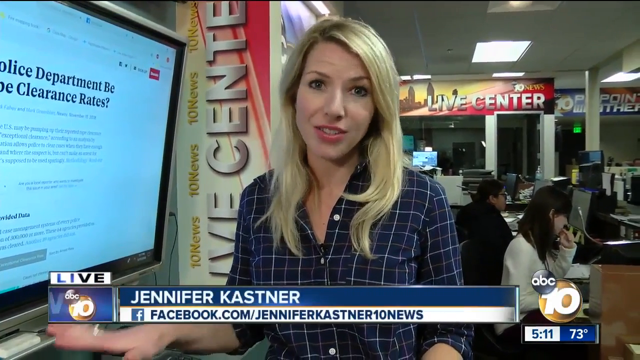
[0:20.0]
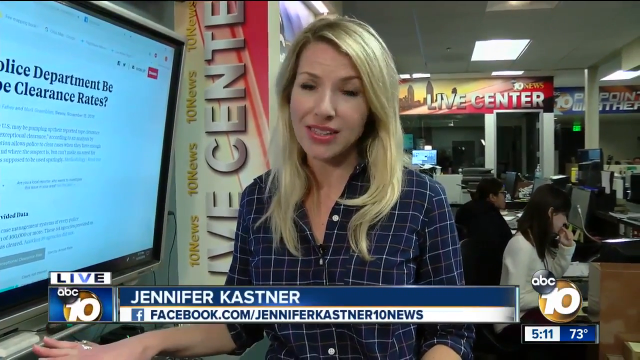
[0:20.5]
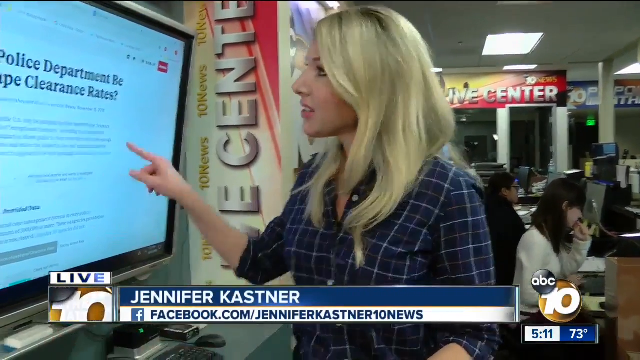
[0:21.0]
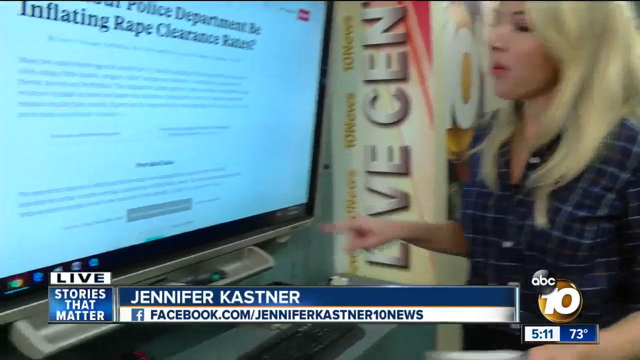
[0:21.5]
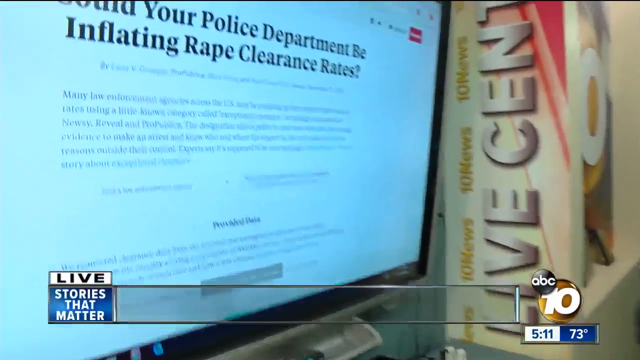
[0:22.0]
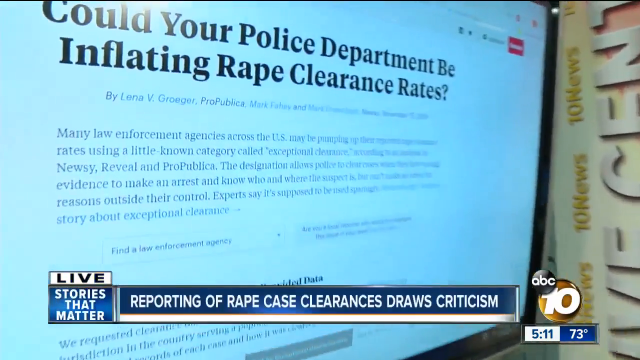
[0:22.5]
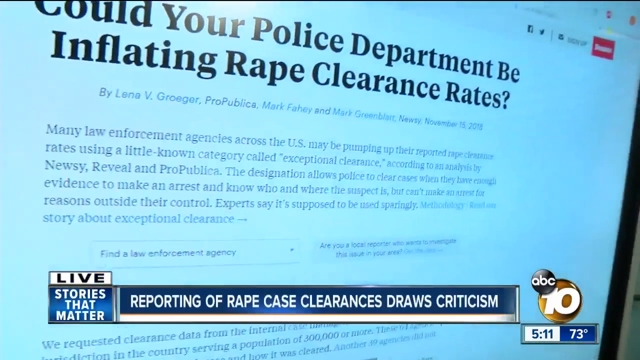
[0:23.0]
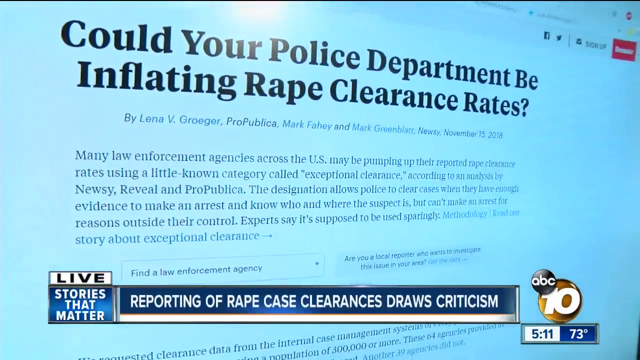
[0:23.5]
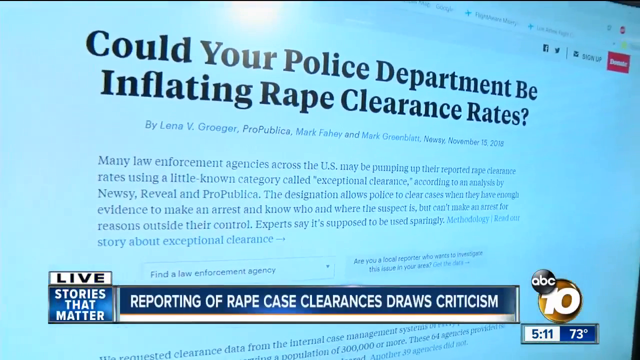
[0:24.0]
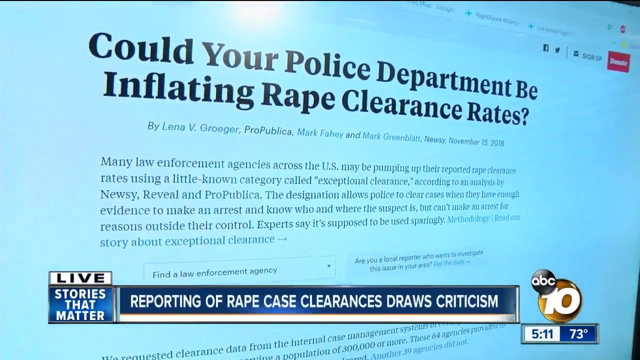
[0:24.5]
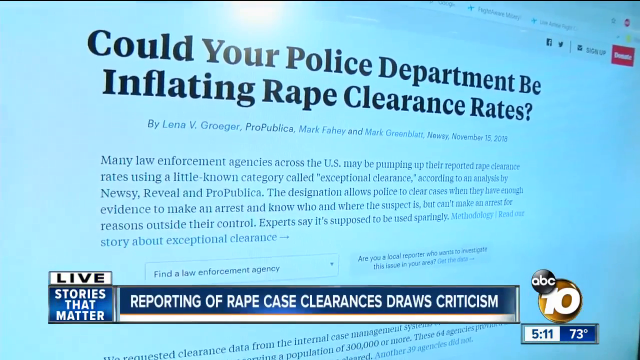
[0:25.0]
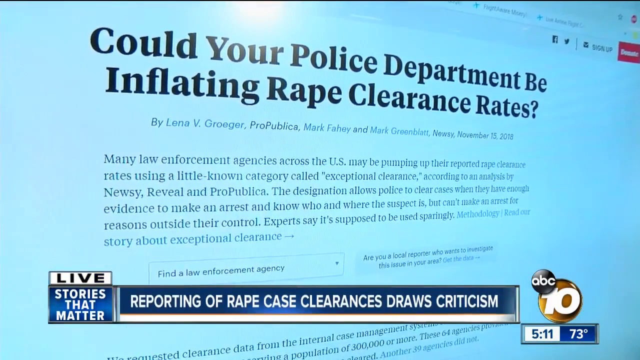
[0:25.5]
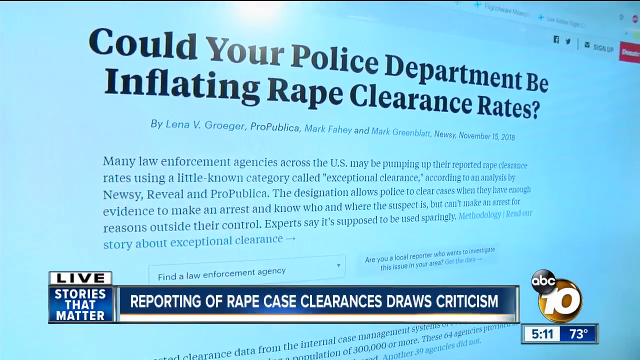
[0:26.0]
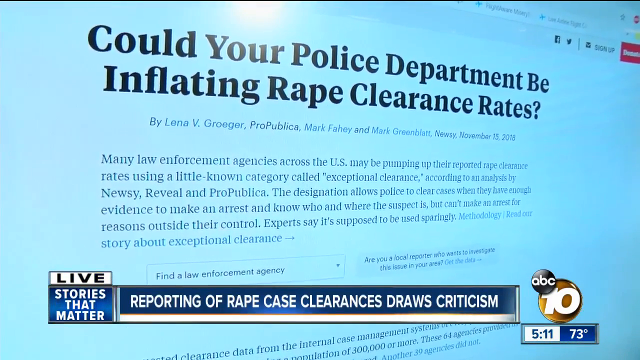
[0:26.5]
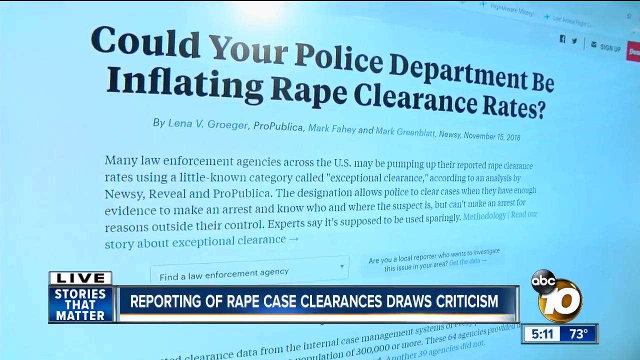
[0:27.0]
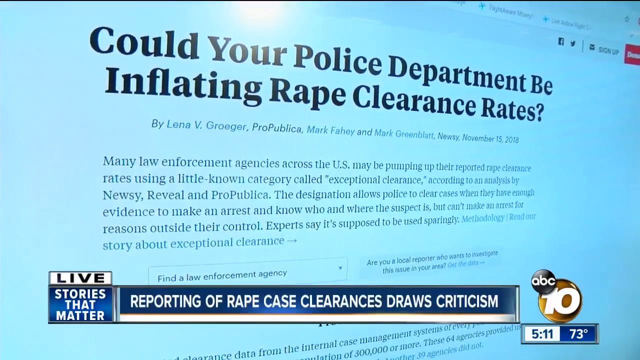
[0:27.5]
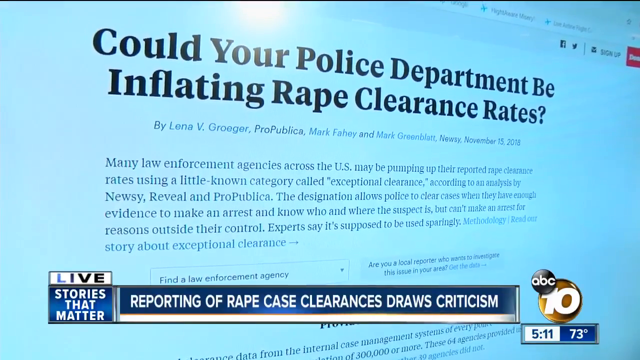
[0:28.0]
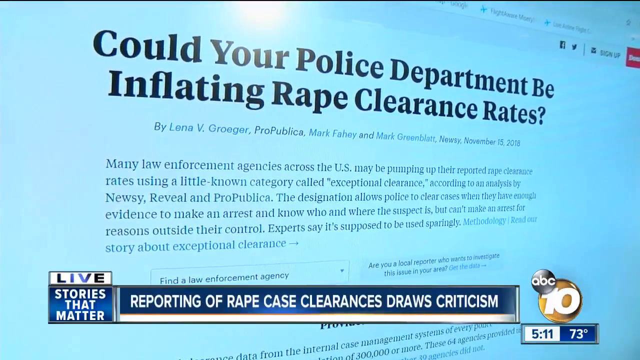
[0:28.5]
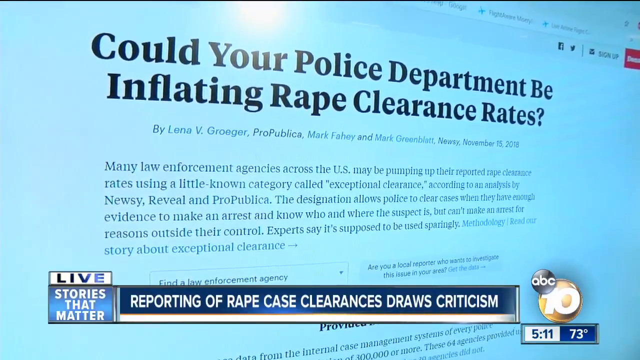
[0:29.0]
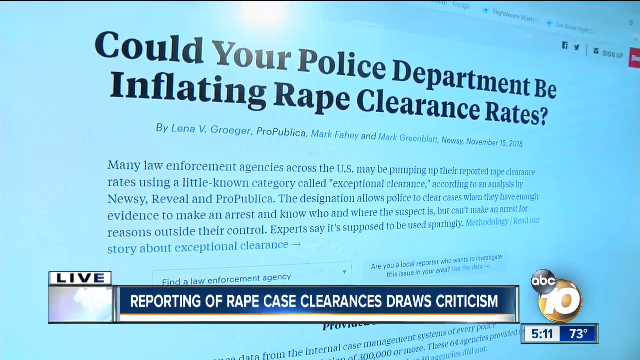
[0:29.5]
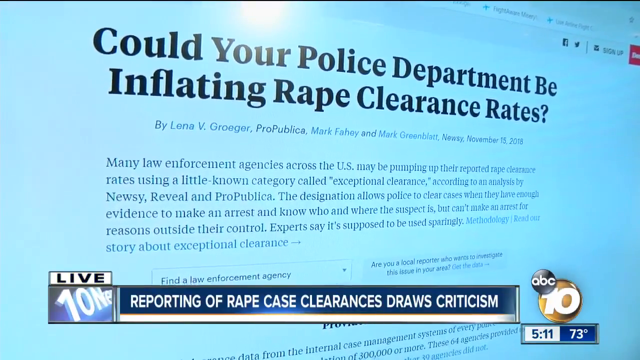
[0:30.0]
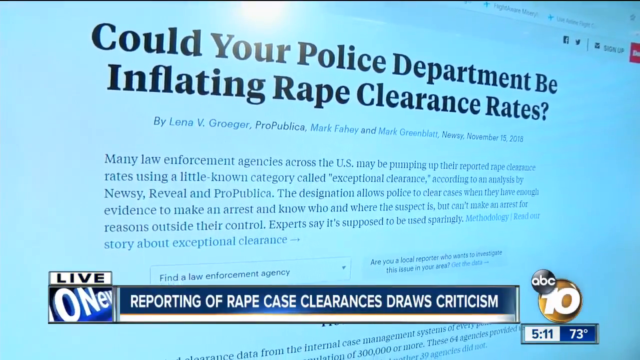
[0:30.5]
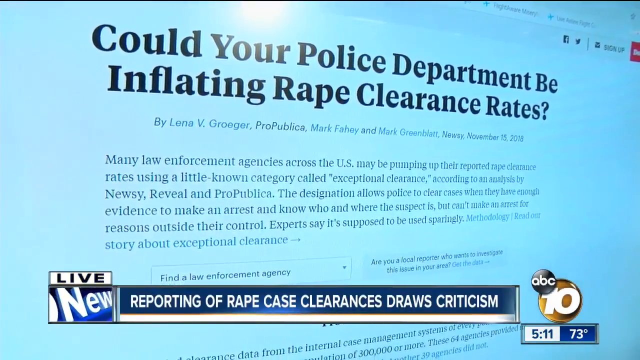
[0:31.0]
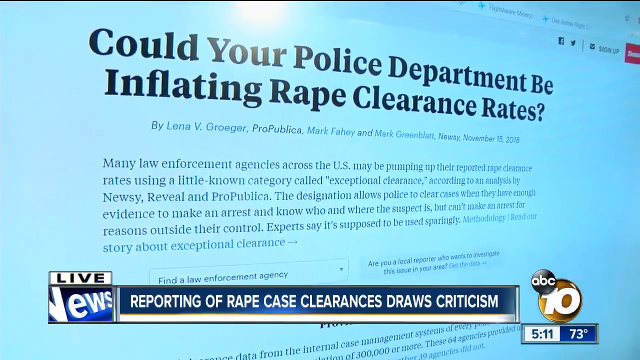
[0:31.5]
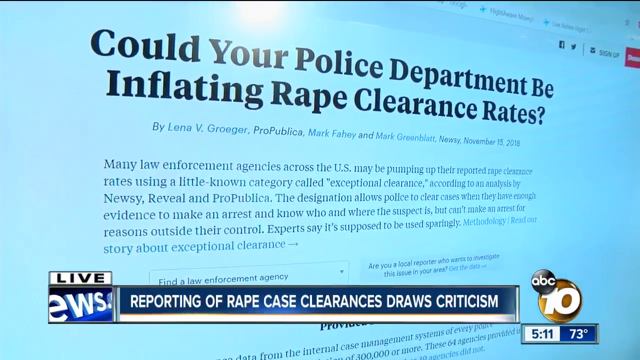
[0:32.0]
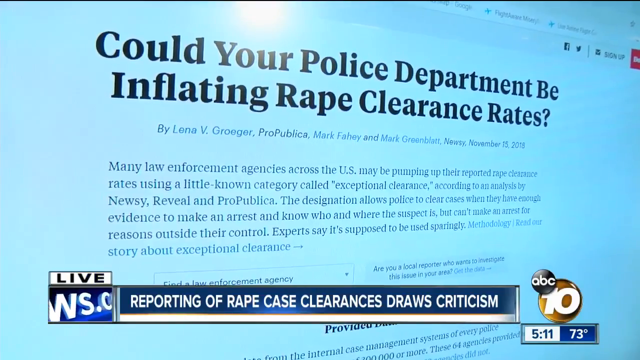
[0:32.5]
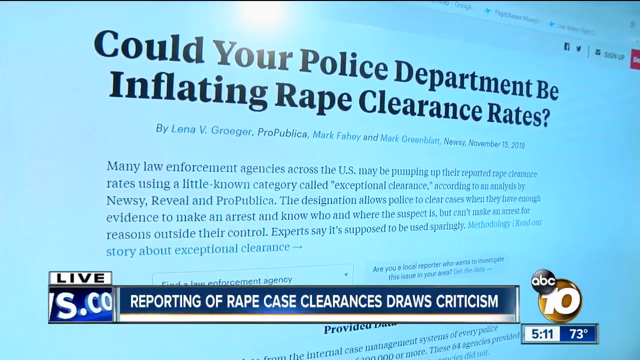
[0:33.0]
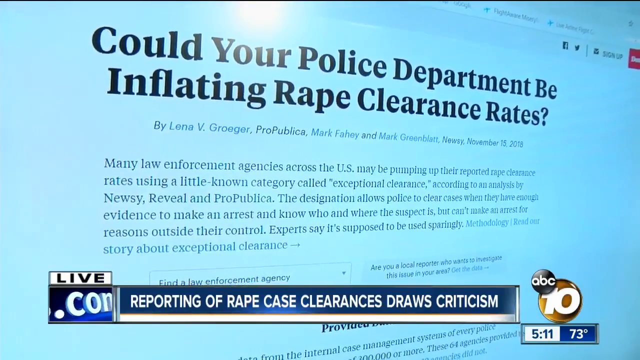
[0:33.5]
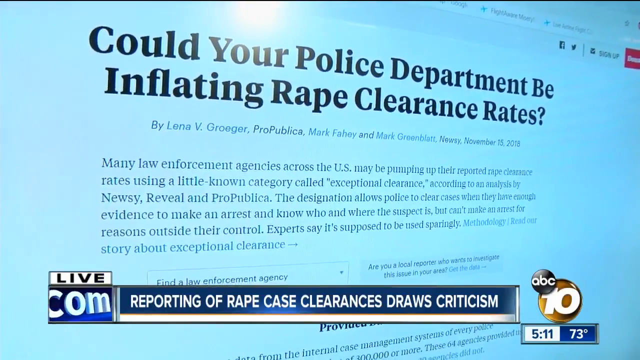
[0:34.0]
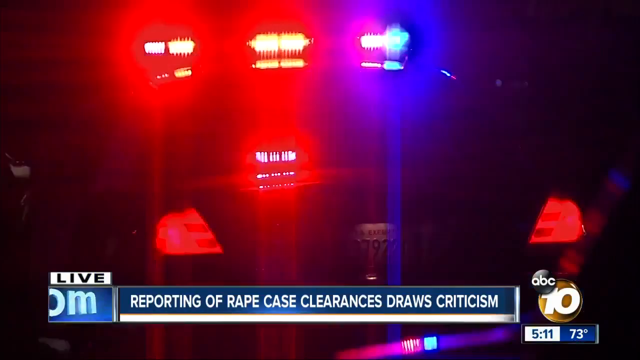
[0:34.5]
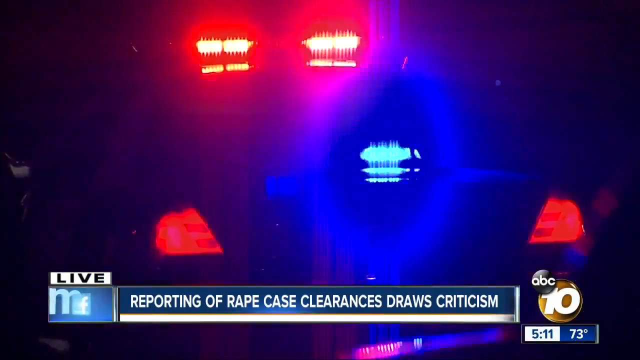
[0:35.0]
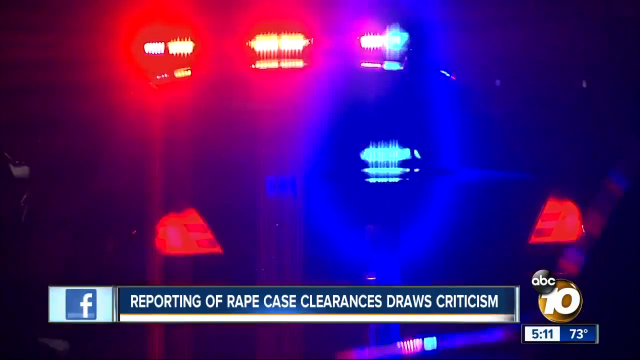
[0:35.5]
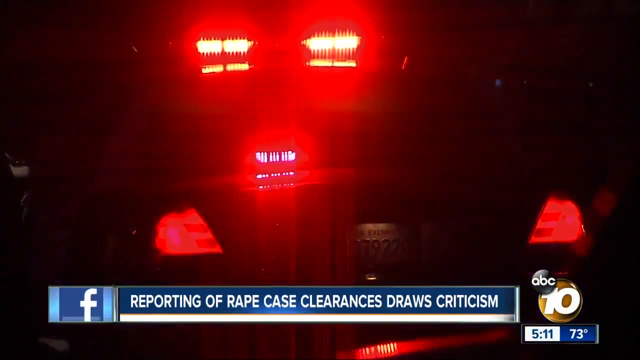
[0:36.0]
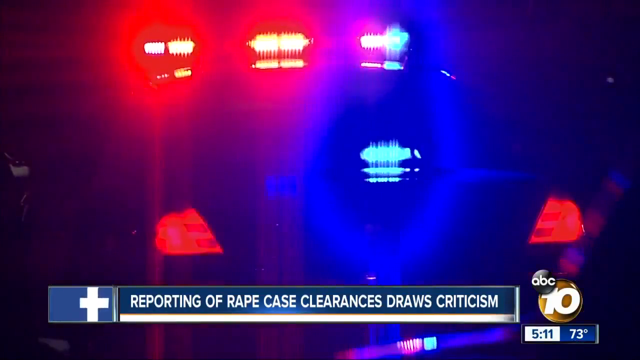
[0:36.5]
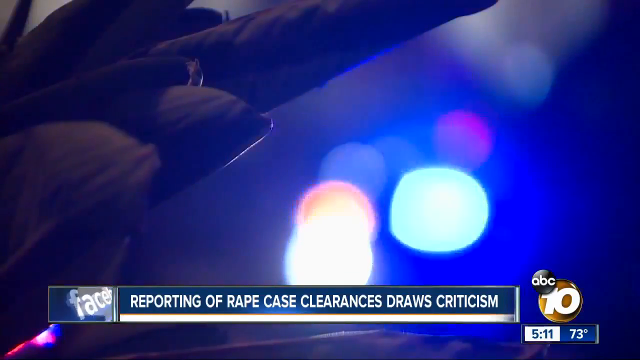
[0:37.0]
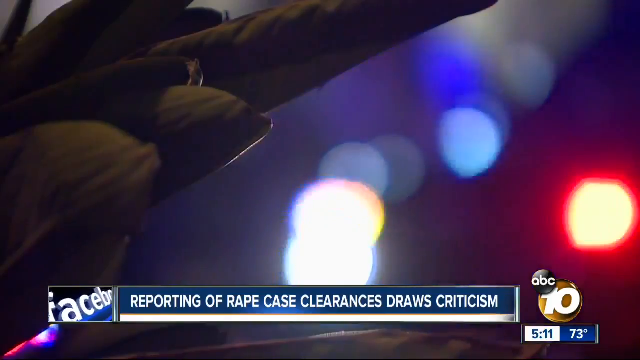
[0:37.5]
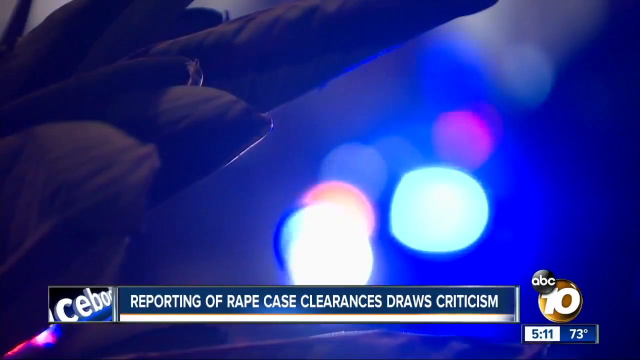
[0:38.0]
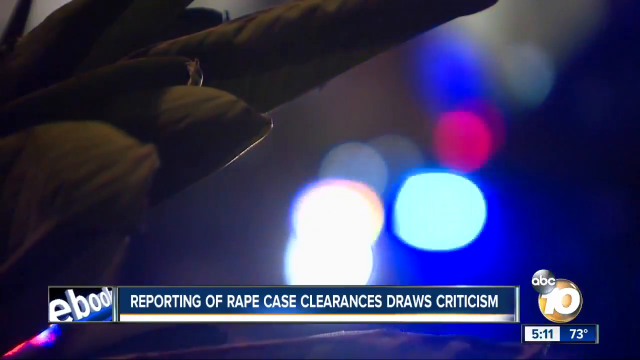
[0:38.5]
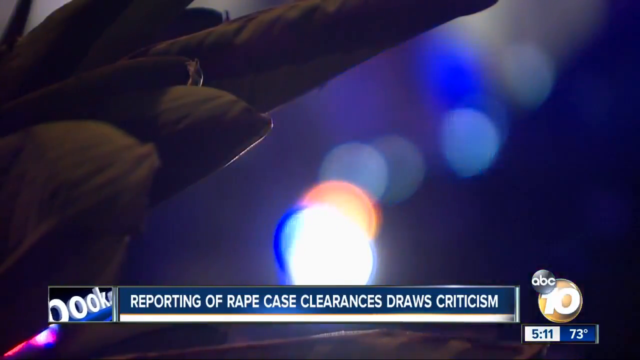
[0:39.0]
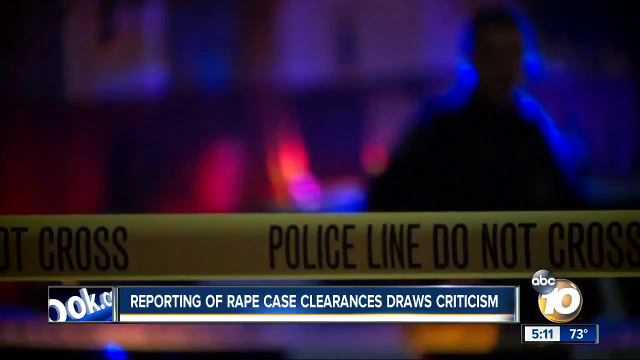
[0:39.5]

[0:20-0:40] Text appears about rape clearance rates and "many law enforcement agencies across the U.S.", citing an analysis, and reads: "It allows police to clear cases when they have enough evidence to make an arrest and know who and where the suspect is, but can't make an arrest for a reason outside their control." Jennifer is still on the ground, continuing to report.